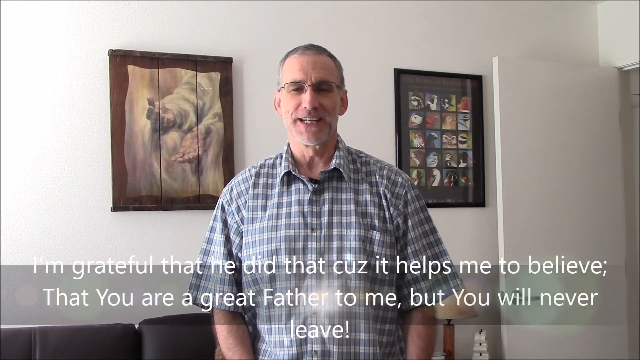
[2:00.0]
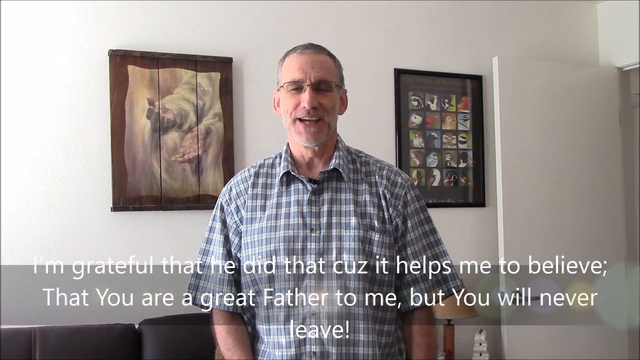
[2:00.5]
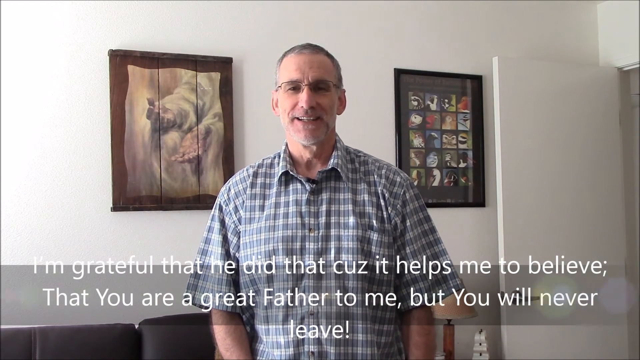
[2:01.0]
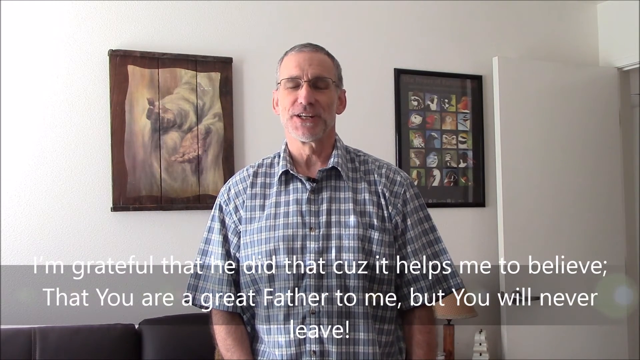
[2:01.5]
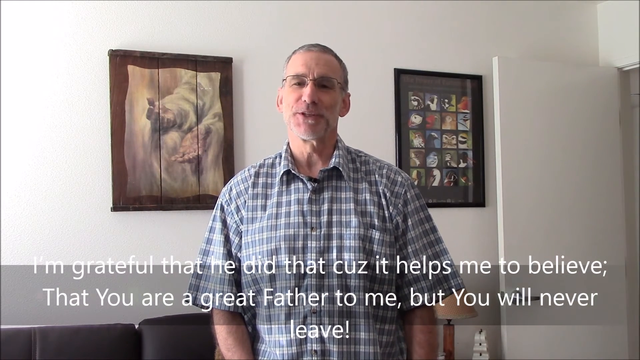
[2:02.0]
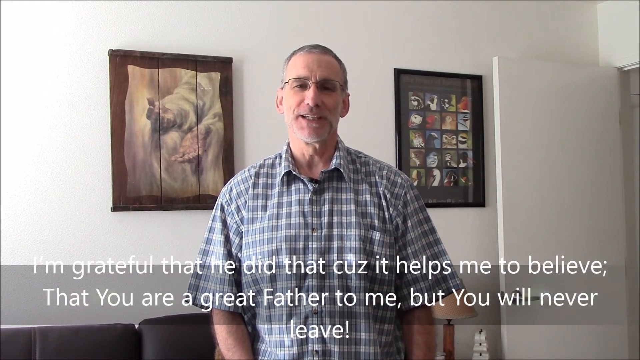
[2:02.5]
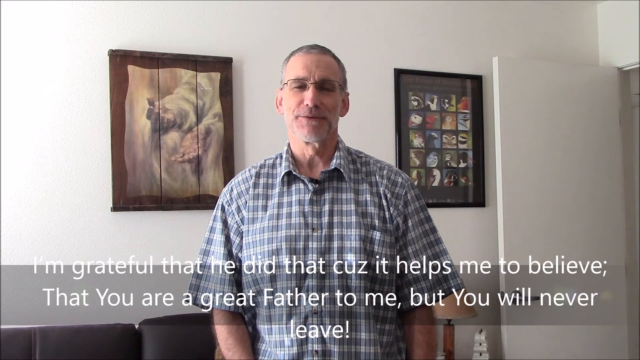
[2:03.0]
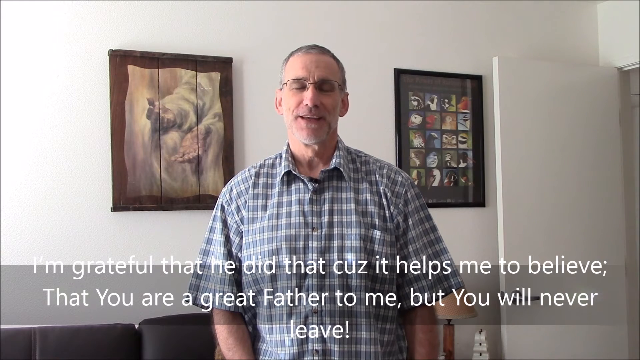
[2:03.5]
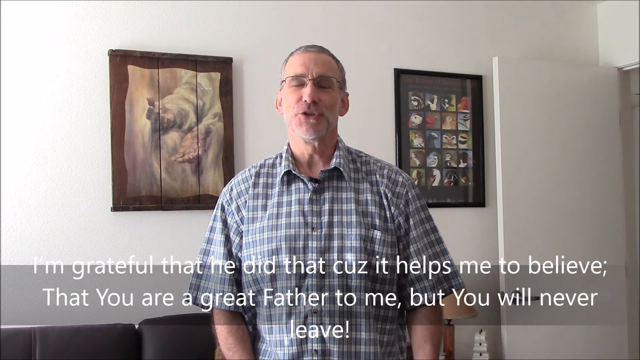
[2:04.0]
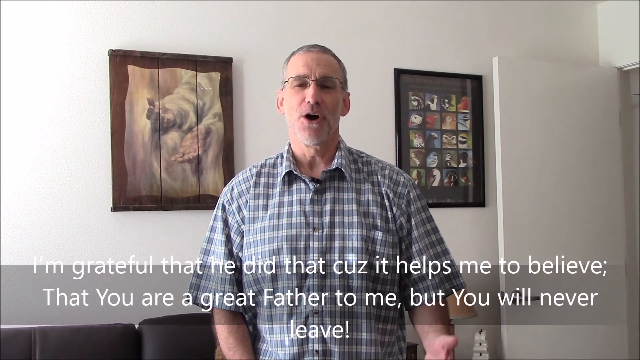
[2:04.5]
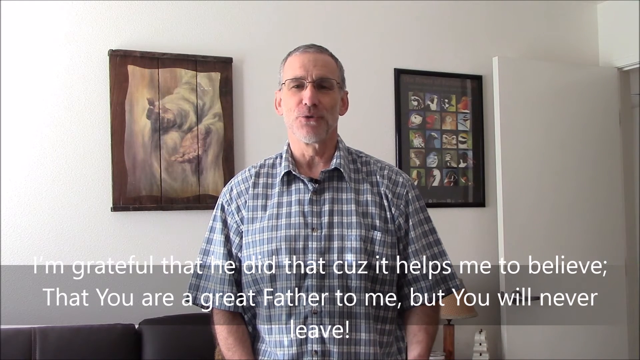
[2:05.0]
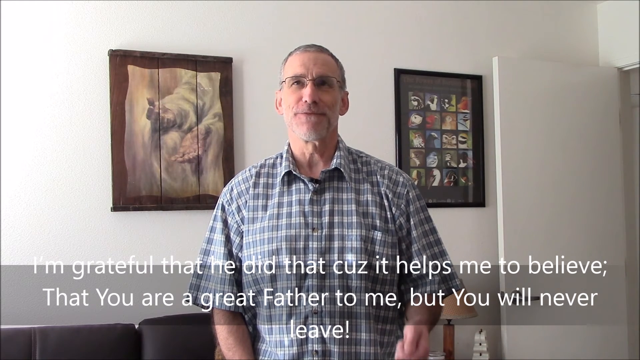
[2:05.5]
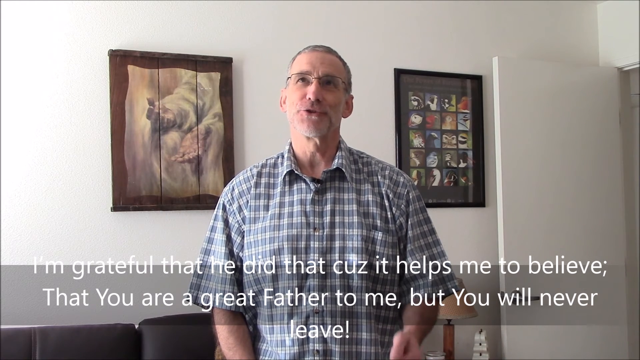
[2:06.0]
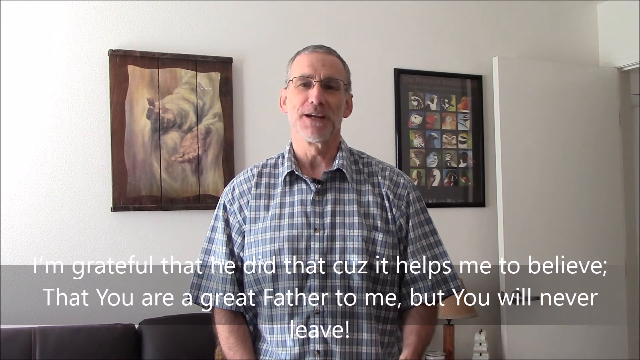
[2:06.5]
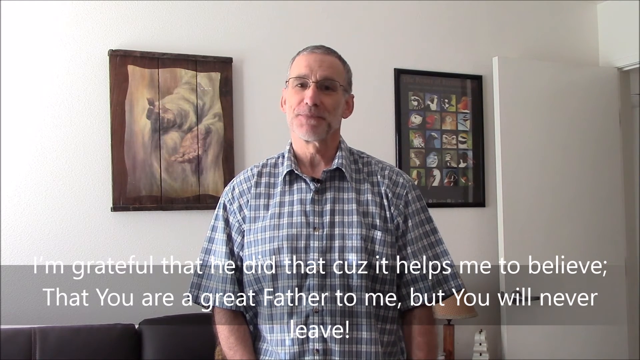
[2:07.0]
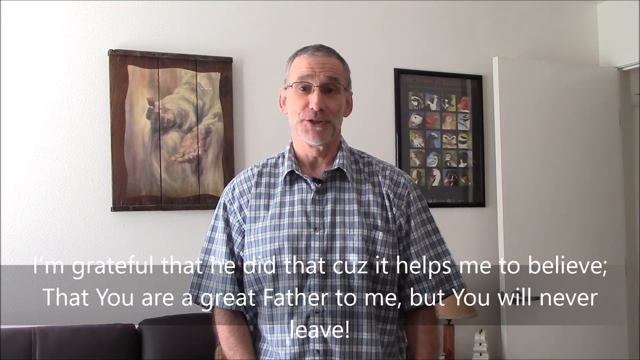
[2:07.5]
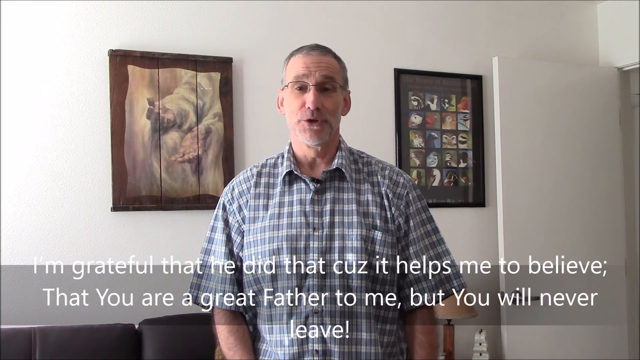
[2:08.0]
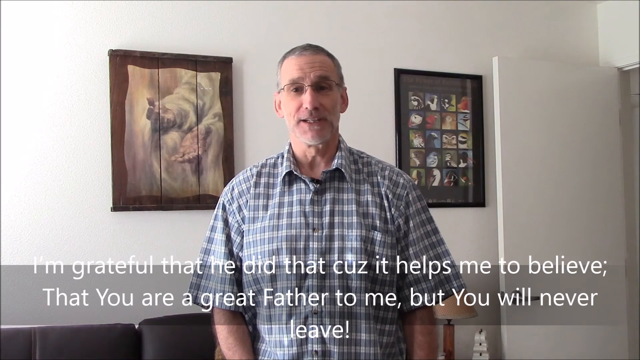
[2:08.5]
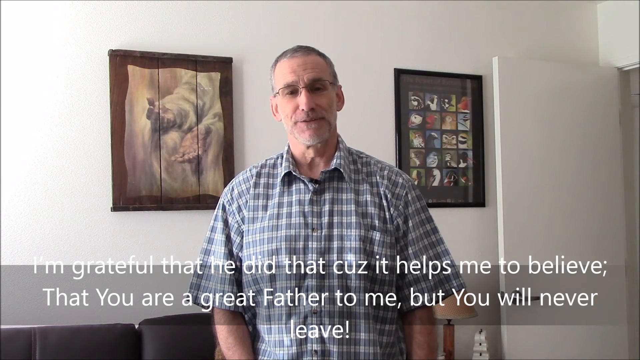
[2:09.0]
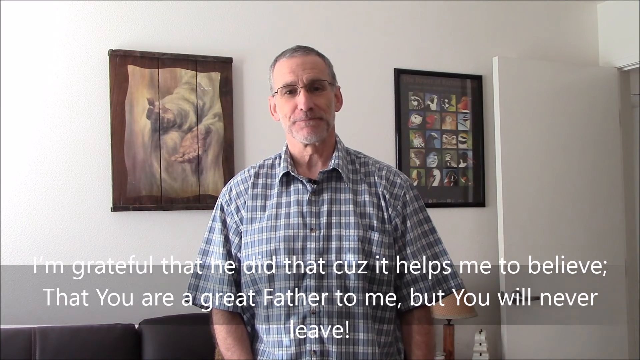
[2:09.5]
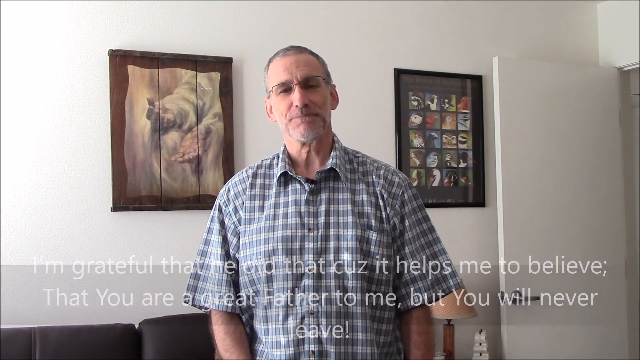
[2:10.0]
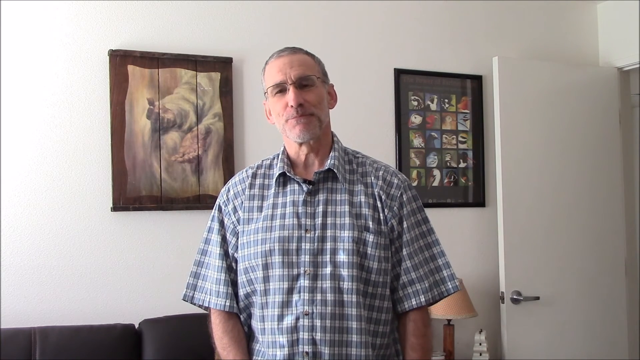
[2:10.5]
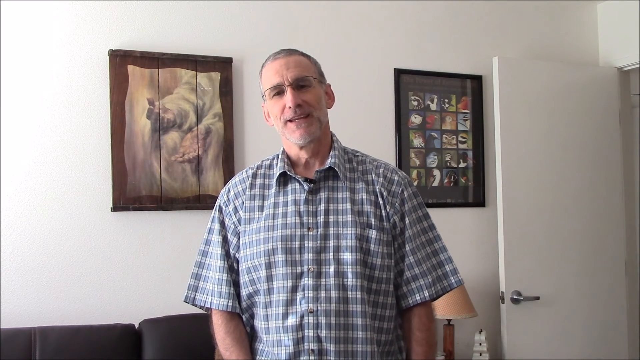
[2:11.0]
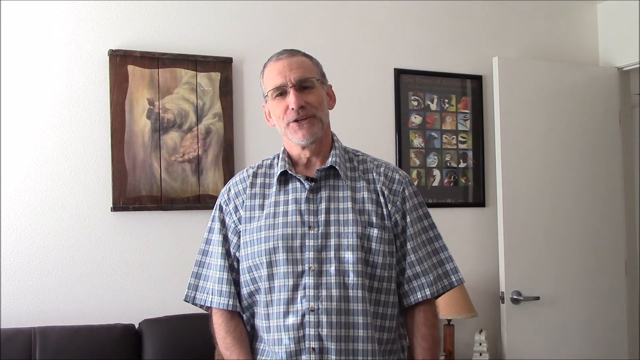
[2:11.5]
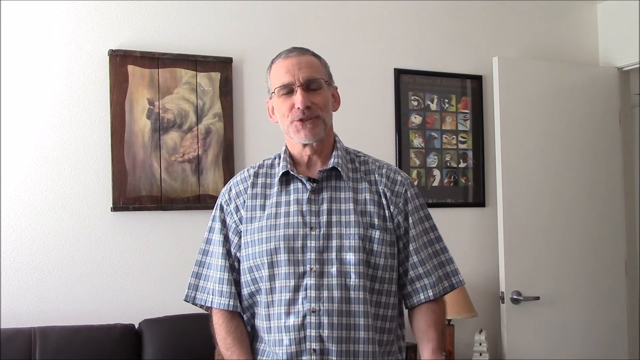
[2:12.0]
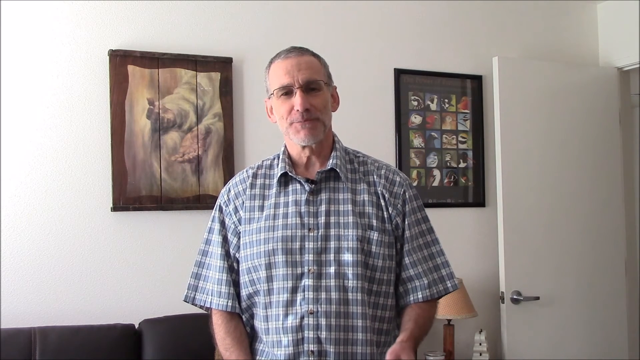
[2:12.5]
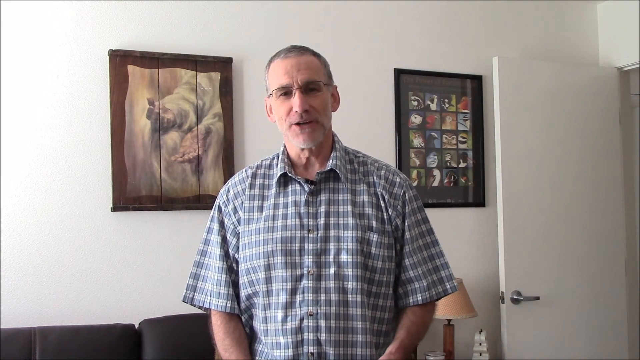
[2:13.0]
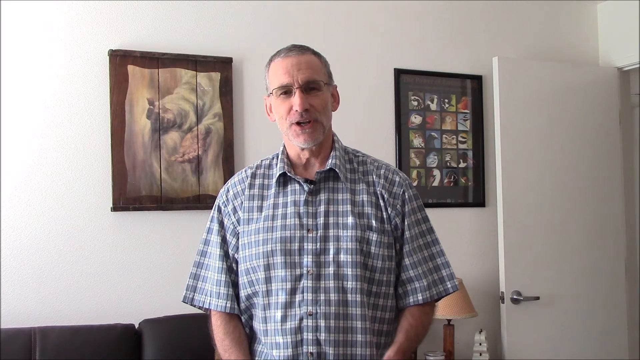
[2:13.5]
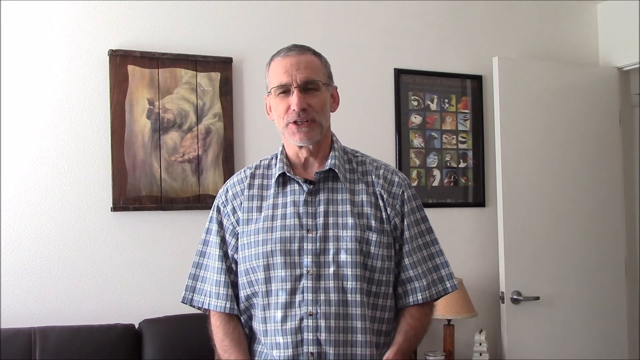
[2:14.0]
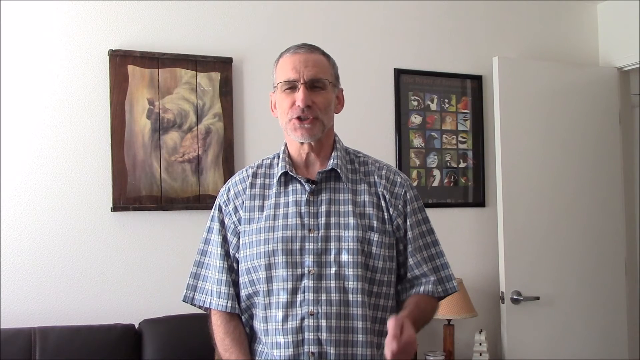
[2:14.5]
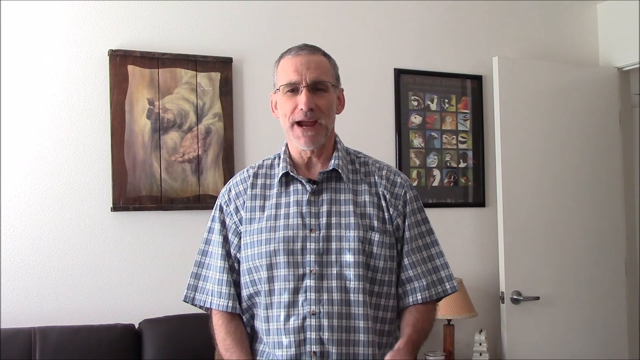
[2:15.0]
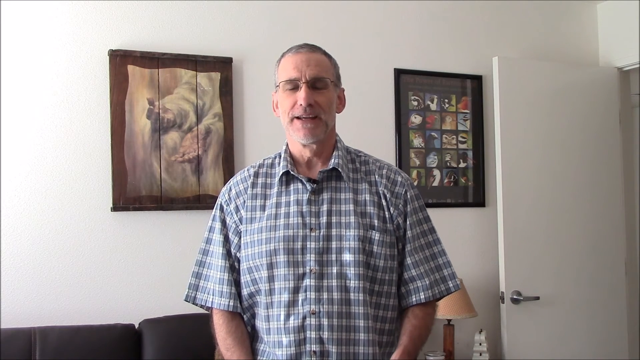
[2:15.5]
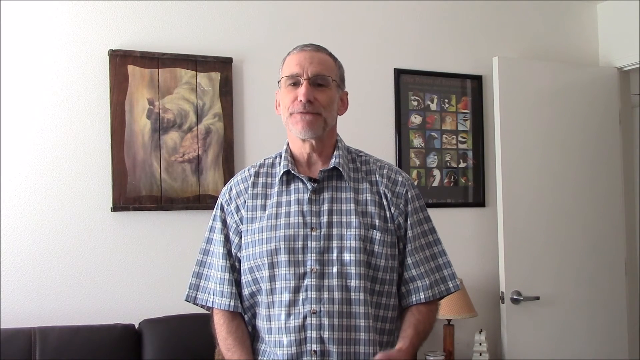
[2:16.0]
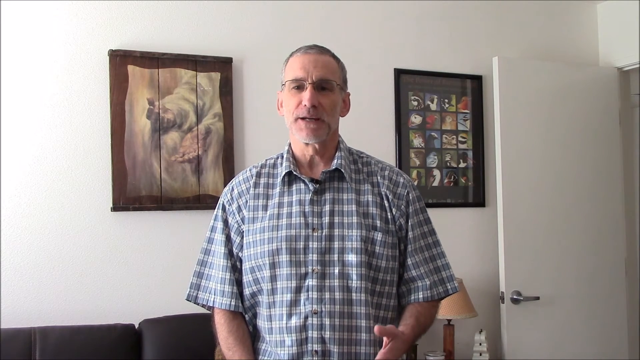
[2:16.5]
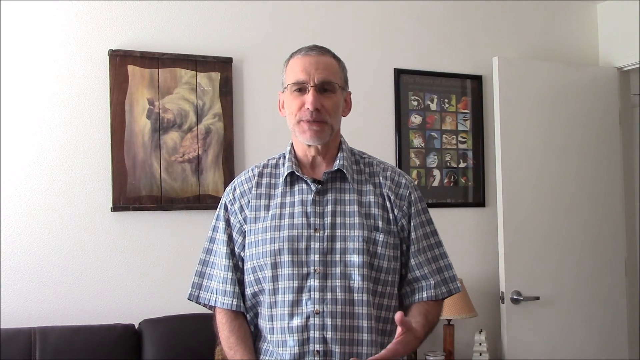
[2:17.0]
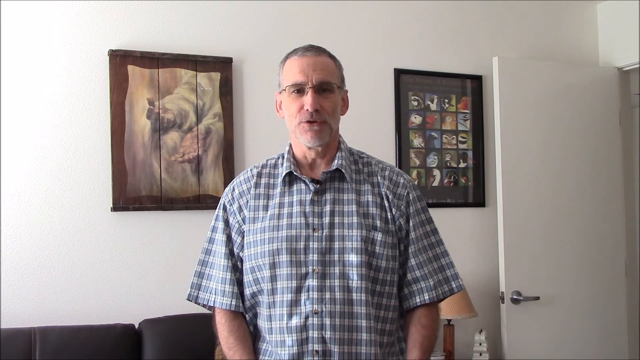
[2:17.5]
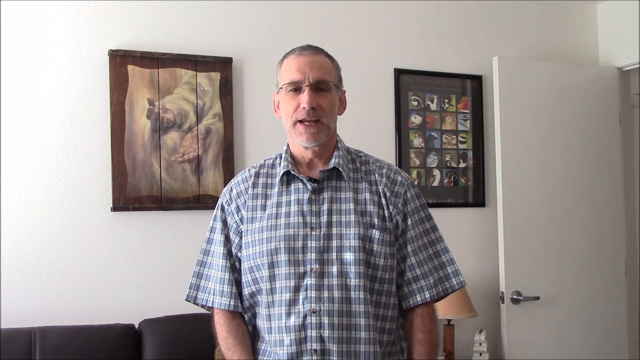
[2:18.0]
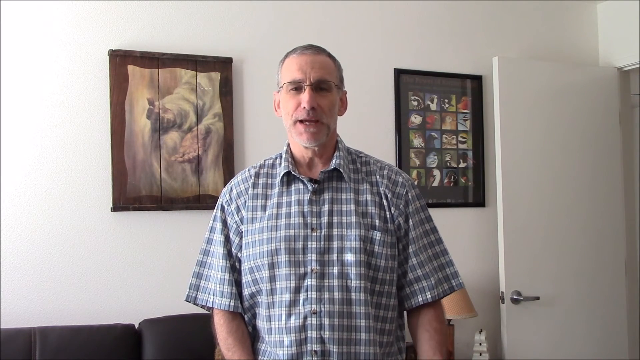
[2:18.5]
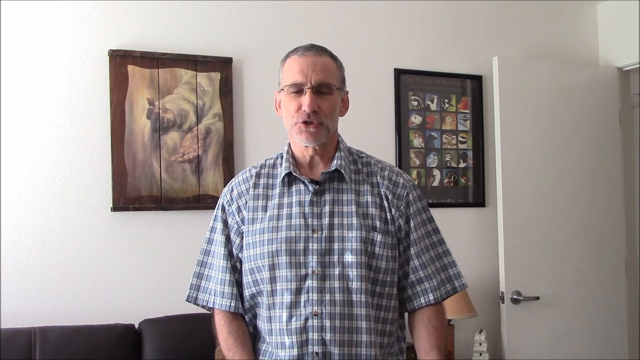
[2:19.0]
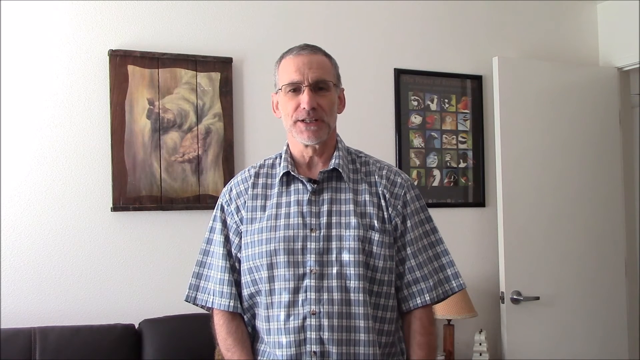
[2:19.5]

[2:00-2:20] The elderly man with glasses and the white and gray plaid shirt stands in the room with white walls and the black leather couch. Instead of text filling the entire screen, a few words of the poem appear at the bottom of the screen, over the midsection of his shirt. They read, "I'm grateful that he did that because it helps me to believe that you are a great father to me, but you will never leave." With his face more clearly visible, he can be seen reading the poem out loud directly into the camera. He gestures with the hand on the viewer's right, while the hand on the left isn't moving much and looks like it may be in his pocket.